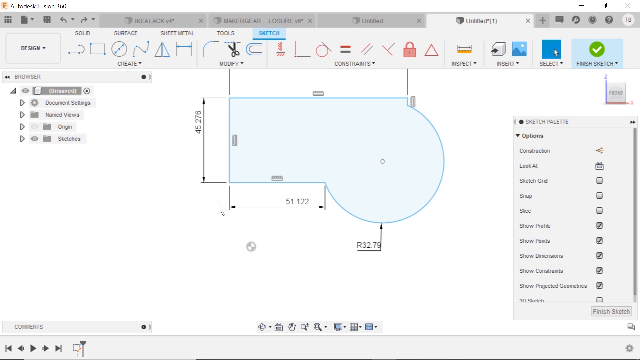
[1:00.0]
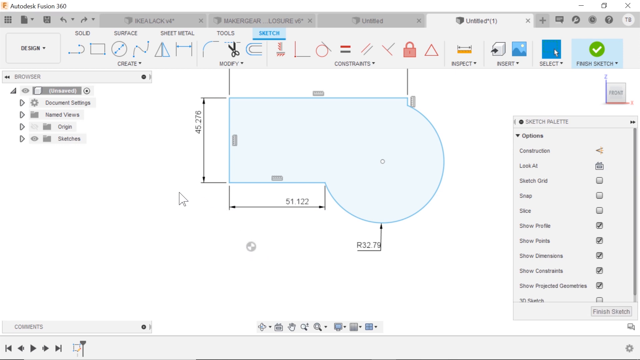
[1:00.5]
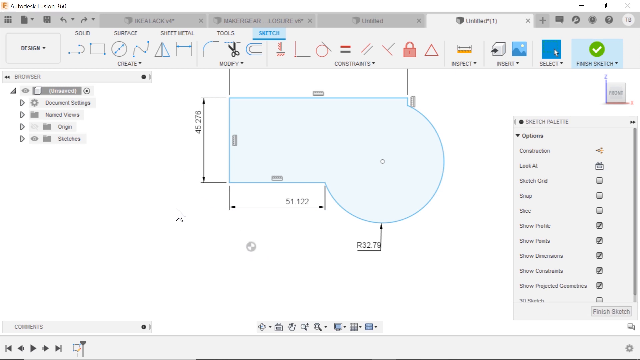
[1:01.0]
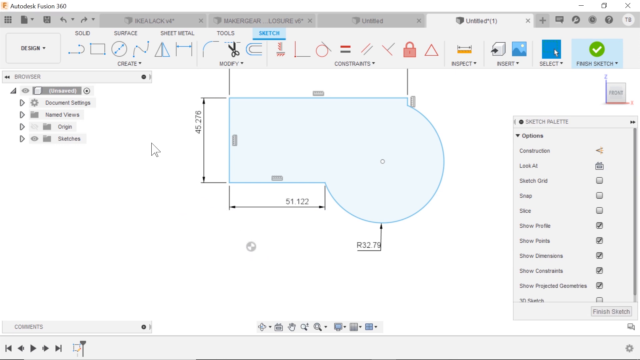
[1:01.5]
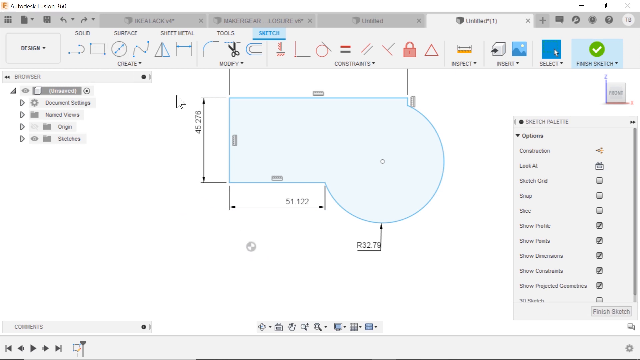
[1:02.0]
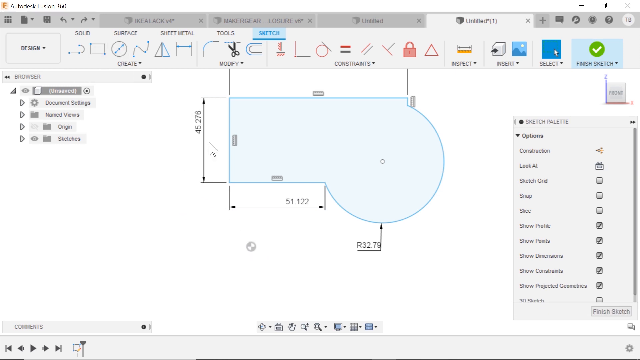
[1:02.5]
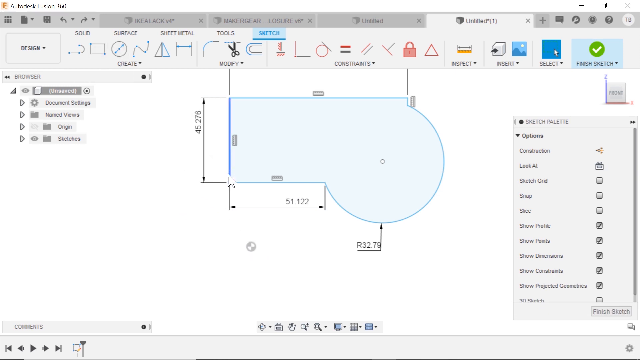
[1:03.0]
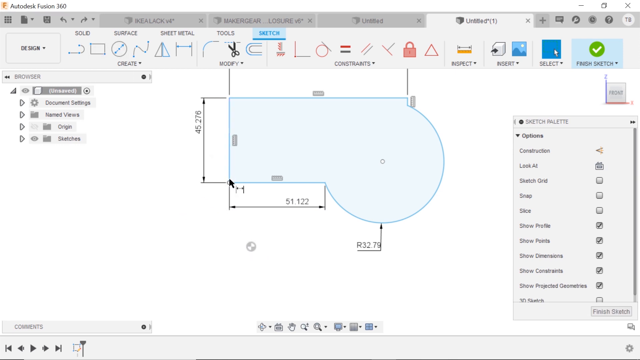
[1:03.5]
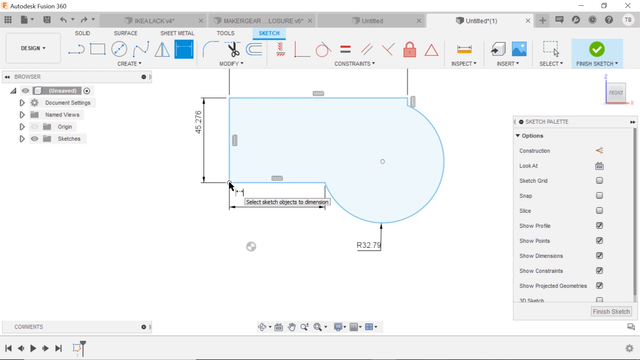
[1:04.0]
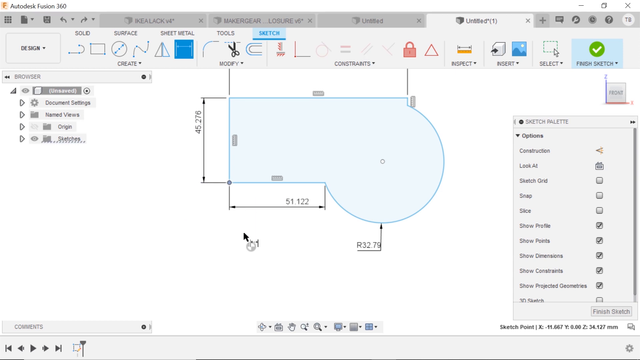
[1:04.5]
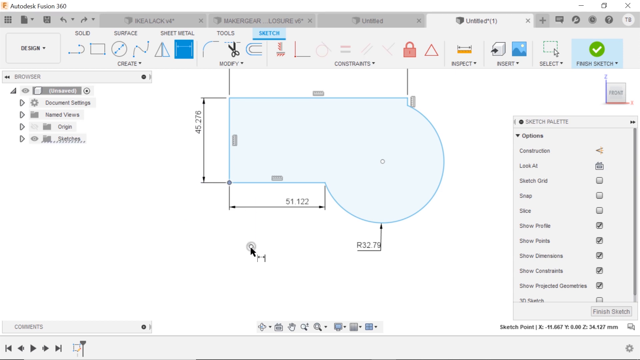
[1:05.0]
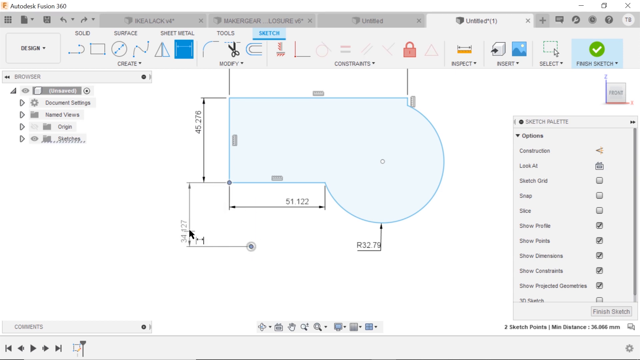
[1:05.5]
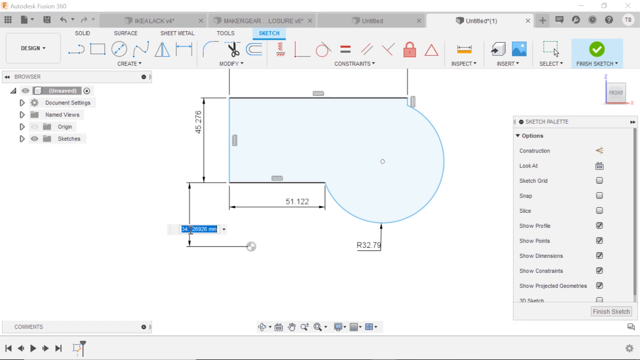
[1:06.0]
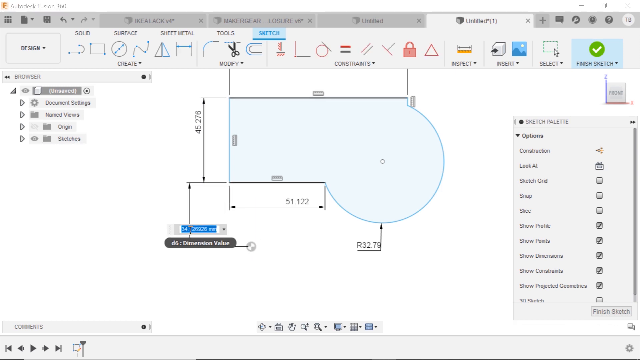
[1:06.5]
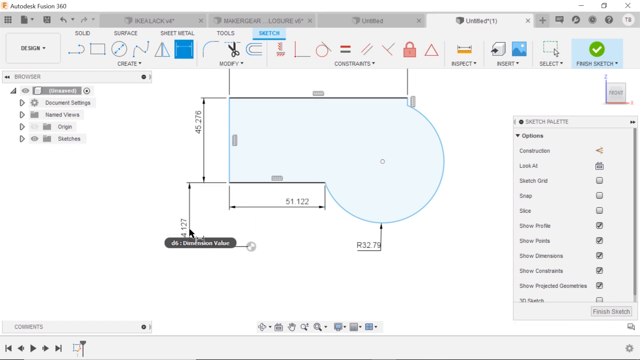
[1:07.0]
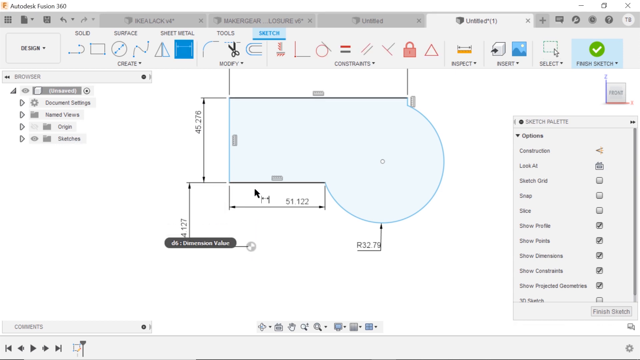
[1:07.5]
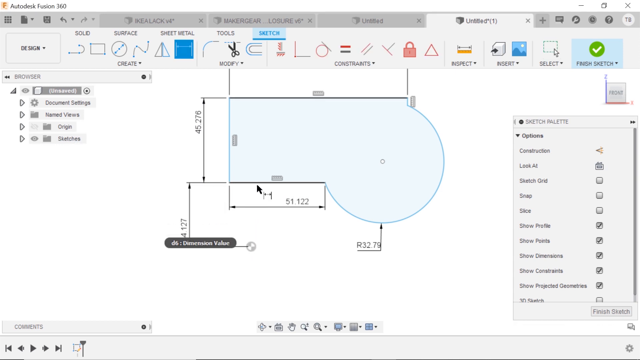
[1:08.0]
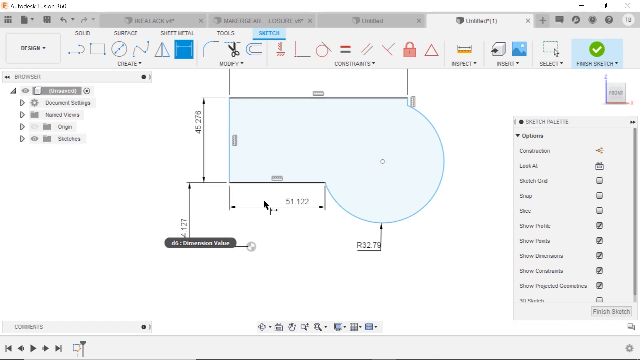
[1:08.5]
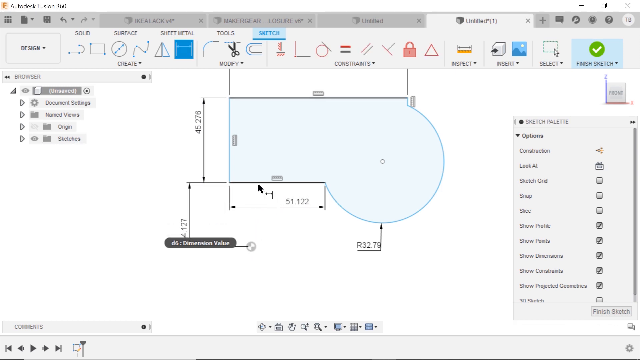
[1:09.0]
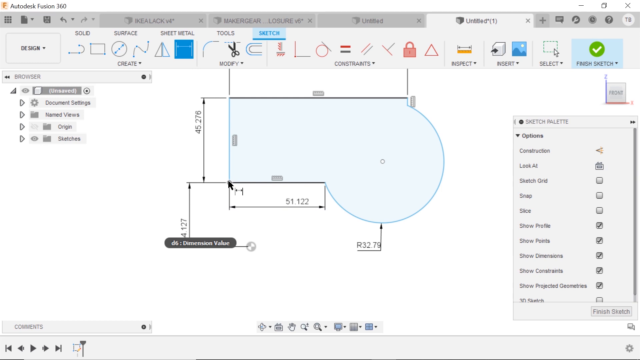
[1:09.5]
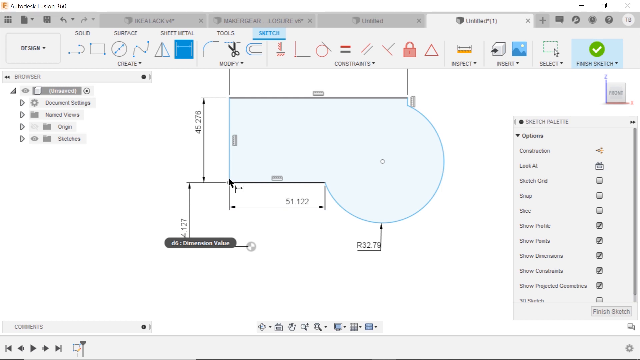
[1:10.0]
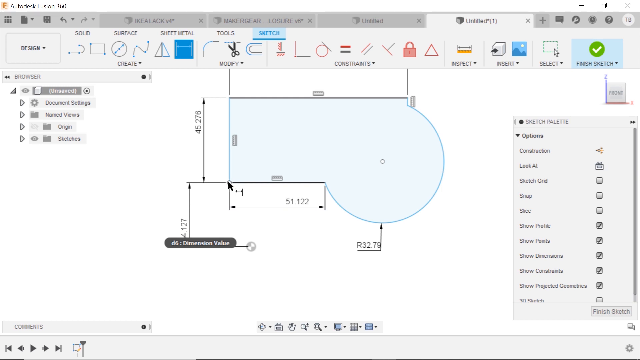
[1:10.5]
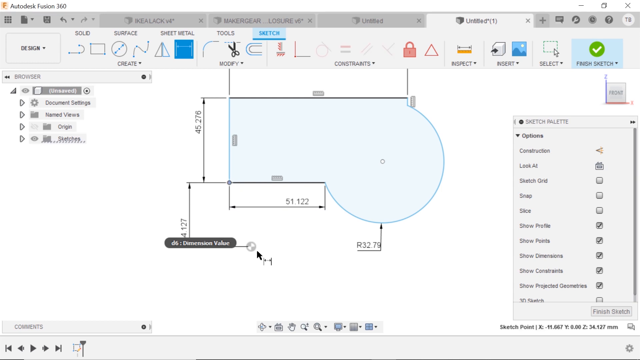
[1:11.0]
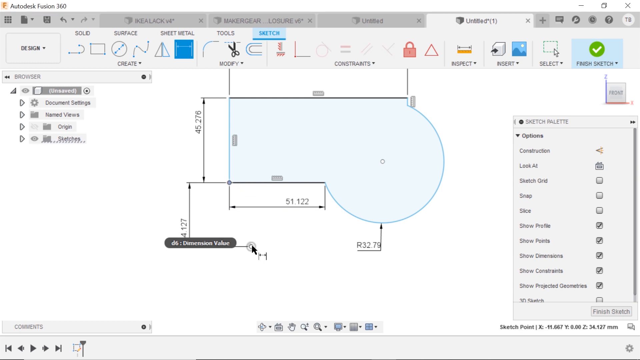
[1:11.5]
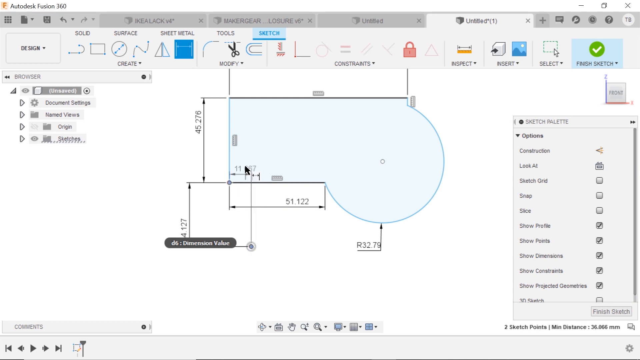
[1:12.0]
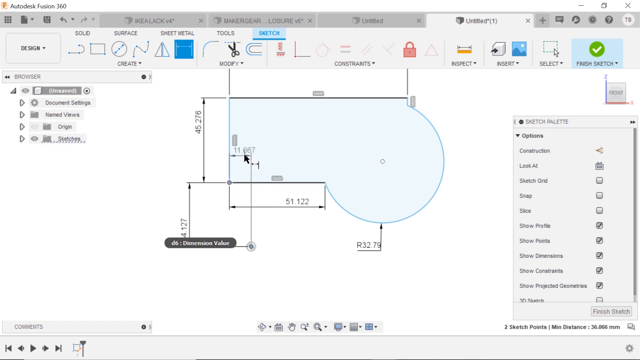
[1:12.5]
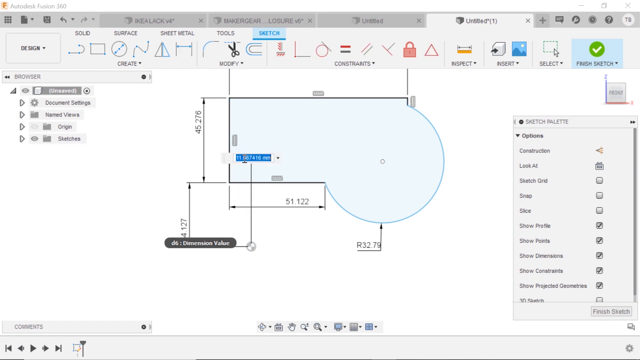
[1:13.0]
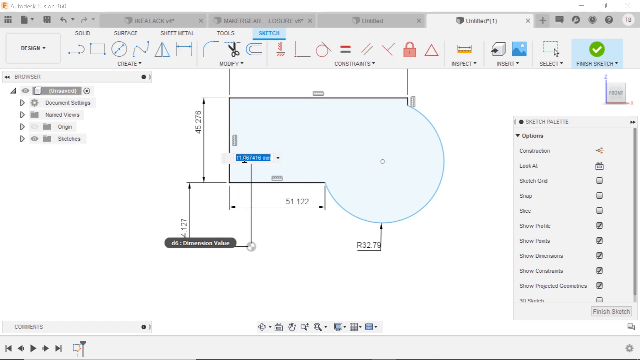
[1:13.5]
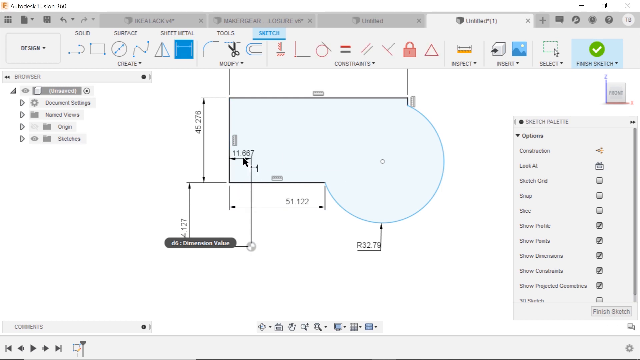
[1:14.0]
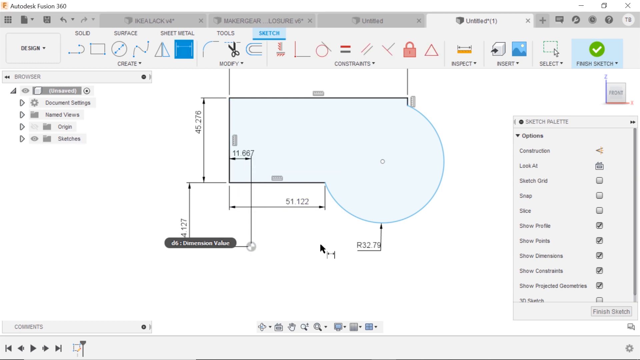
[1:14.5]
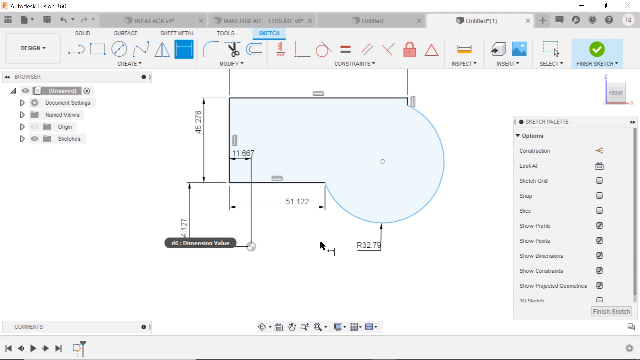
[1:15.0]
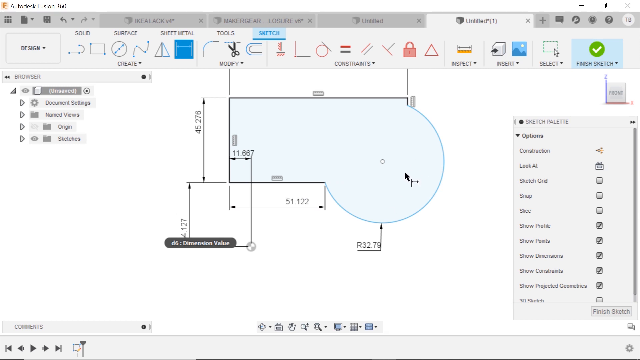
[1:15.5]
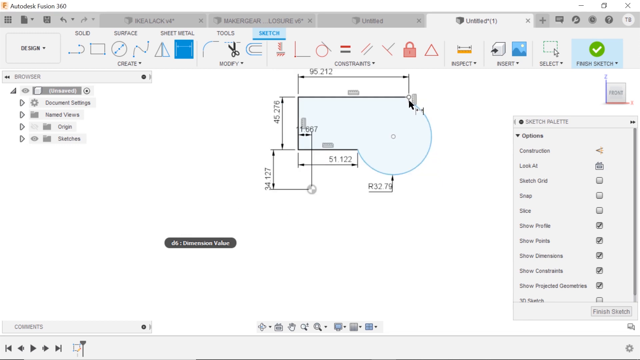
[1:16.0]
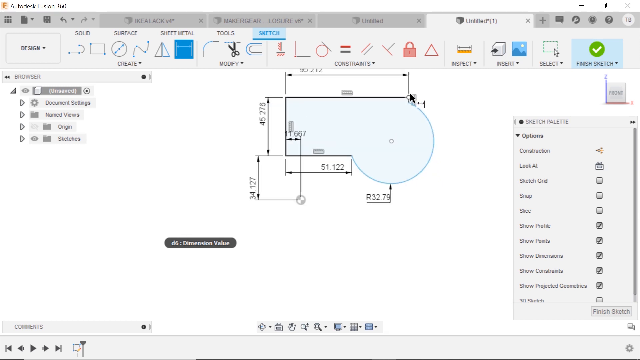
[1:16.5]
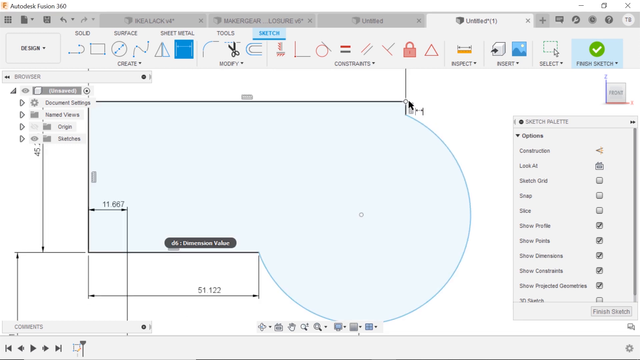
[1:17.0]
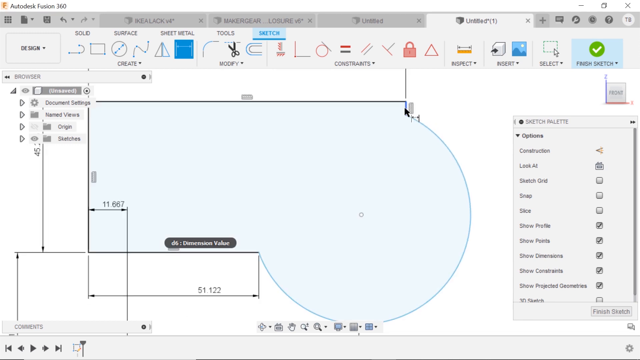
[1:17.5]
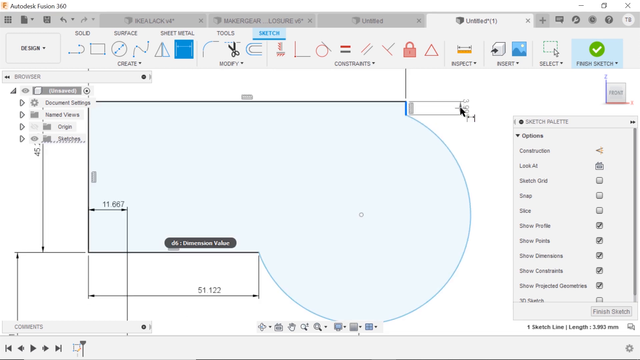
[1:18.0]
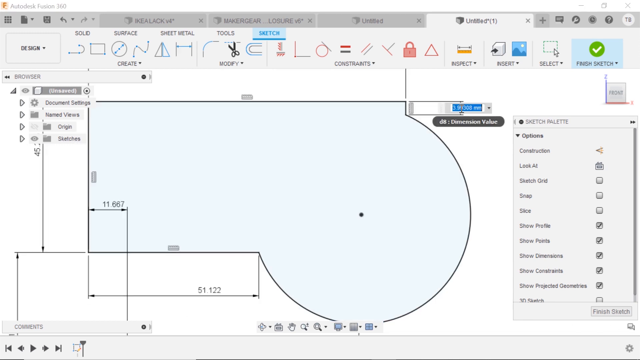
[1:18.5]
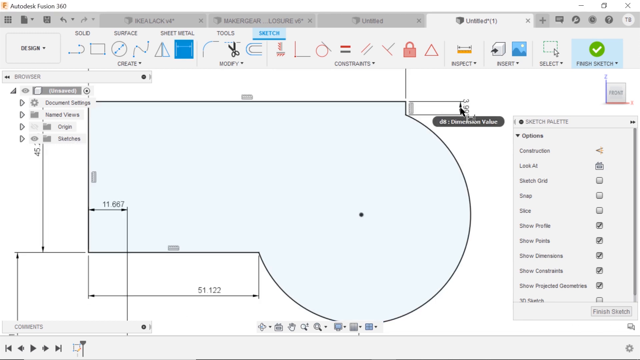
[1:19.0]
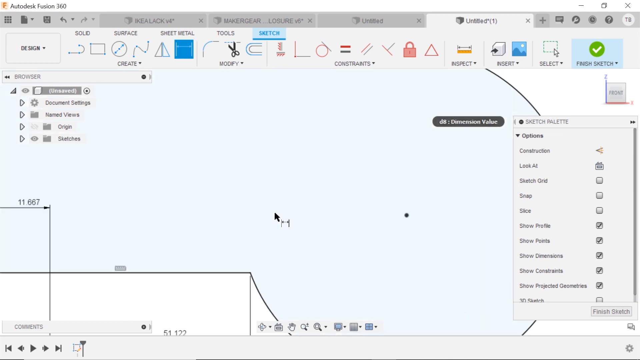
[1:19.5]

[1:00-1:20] The mouse moves up to the menu at the top, where icons are grouped into categories labeled "Solid," "Surface," "Sheet Metal," "Tools" and "Sketch." The Sketch tab appears to be selected, and the icons below it have no labels. The far left icon looks like the letter J mirrored and rotated 90 degrees; another is a rectangle with a dot on its upper left and lower right corners; another looks like a Bezier curve; and one shows two symmetrical triangles. The mouse continues interacting with the shape, and more measurements appear to have been added to the side of the lower left section of the diagram. The view then zooms in to the upper right corner.